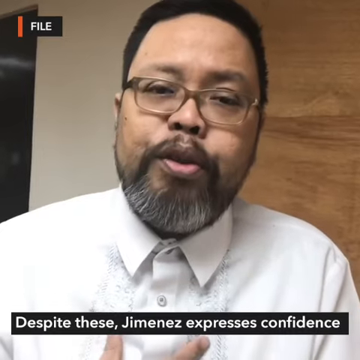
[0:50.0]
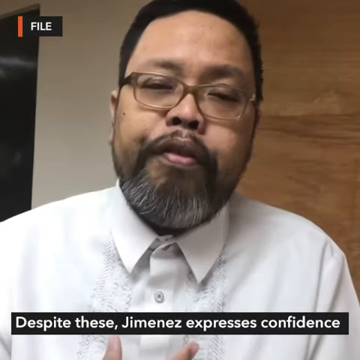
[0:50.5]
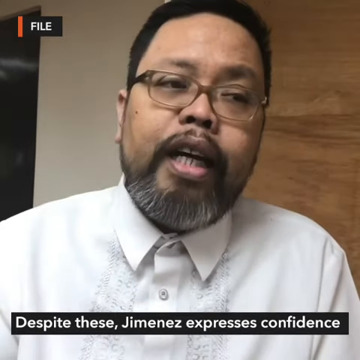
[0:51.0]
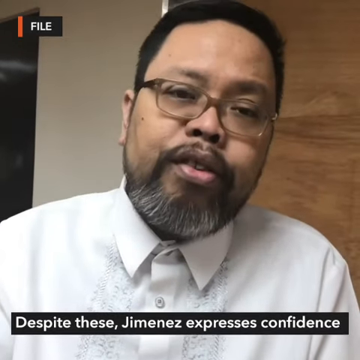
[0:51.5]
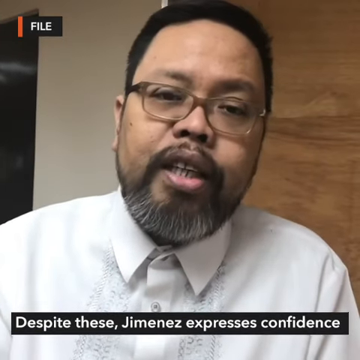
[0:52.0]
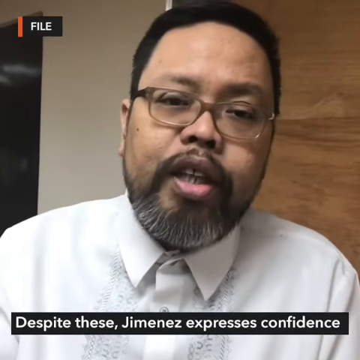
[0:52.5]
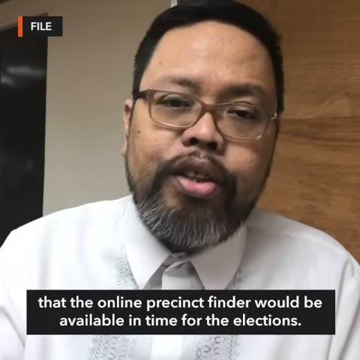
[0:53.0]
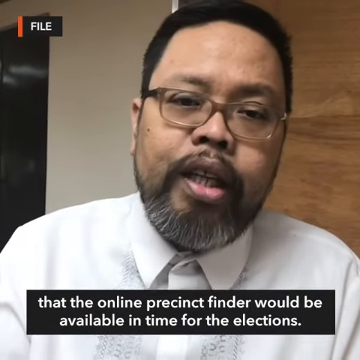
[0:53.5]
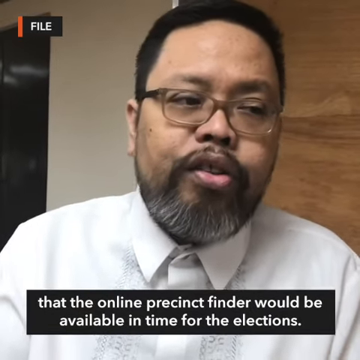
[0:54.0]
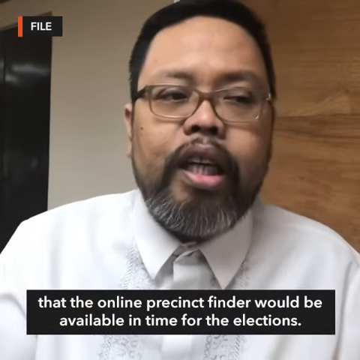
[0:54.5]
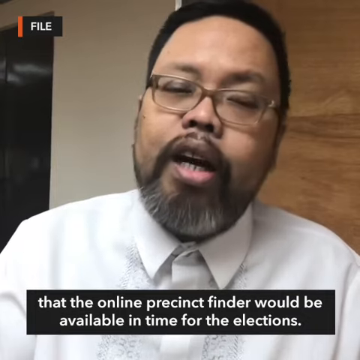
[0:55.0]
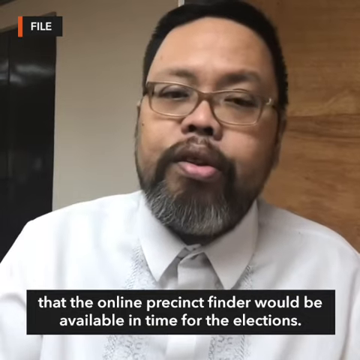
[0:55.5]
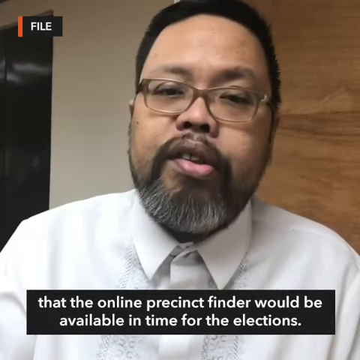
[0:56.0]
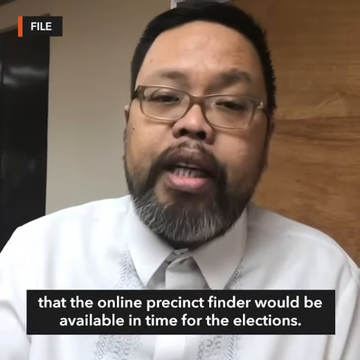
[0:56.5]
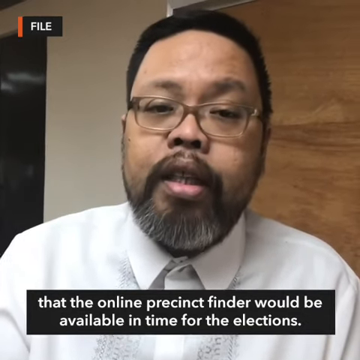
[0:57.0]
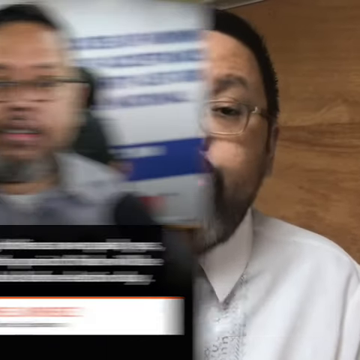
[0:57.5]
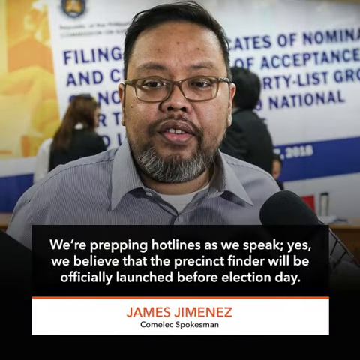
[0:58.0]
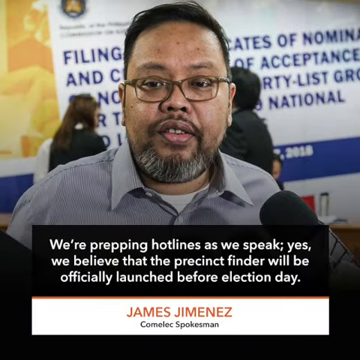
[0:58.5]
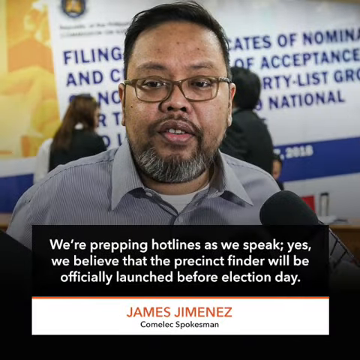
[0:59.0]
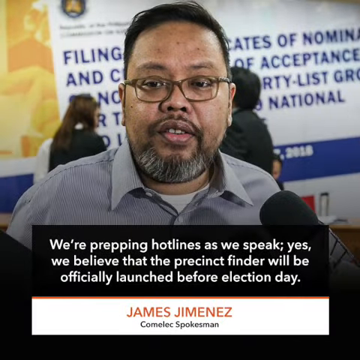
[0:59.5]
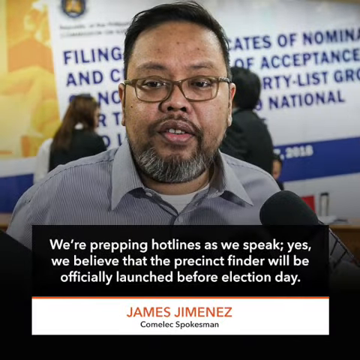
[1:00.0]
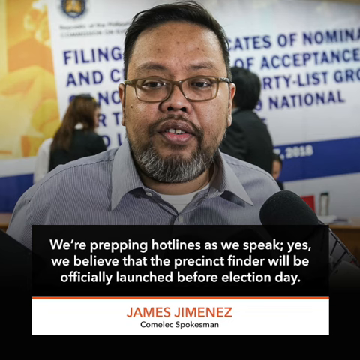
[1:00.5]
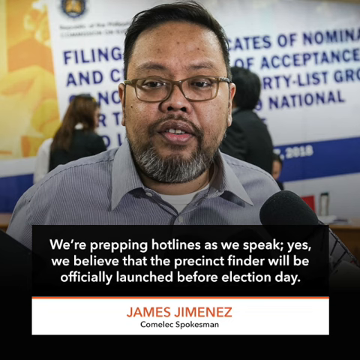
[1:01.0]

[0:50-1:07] James Jimenez appears in a different setting, wearing an all-white button-up long-sleeve shirt and light brown glasses. His beard, which has been clean-cut a little, is gray and white, and the top of his mustache leading down to the beard is all brown. He has light tan skin. He speaks in front of a wooden wall, with a cream wall on the other side, and black text over the shot reads "Despite these, Jimenez expresses concerns and confidence that the online Precinct Finder would be available in time for the elections." The video then returns to a screen with just a picture of his face and a microphone being put up to his mouth. Text underneath reads "We're prepping hotlines as we speak. Yes, we believe that the Precinct Finder will be officially launched before Election Day." Below that, "James Jimenez" appears in orange text, along with "Comelec spokesman."